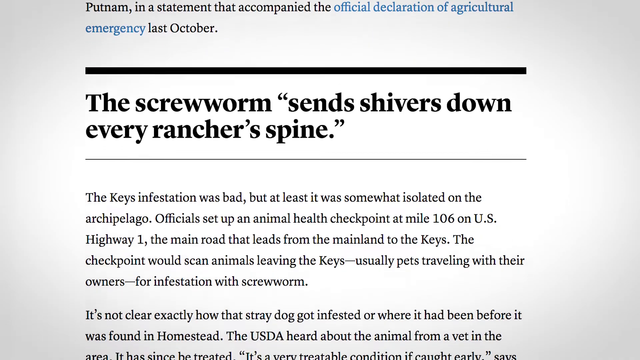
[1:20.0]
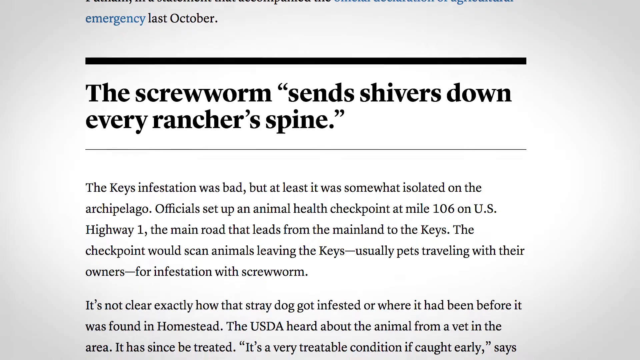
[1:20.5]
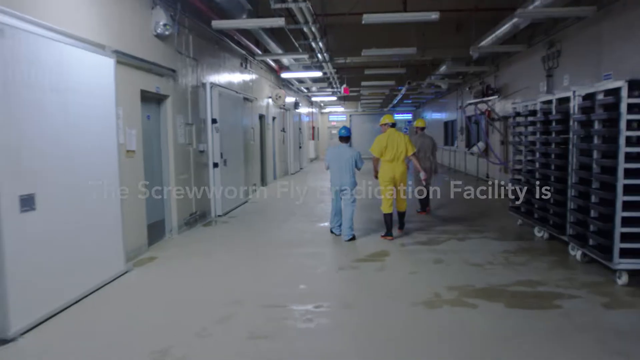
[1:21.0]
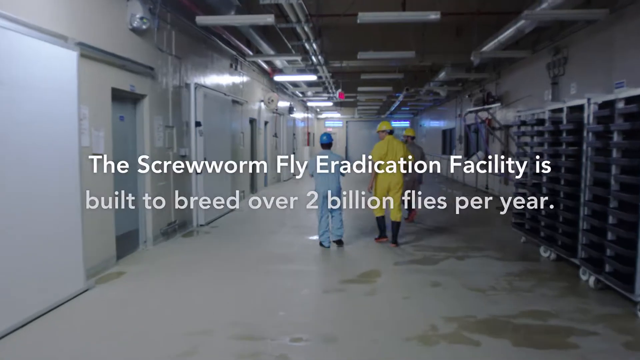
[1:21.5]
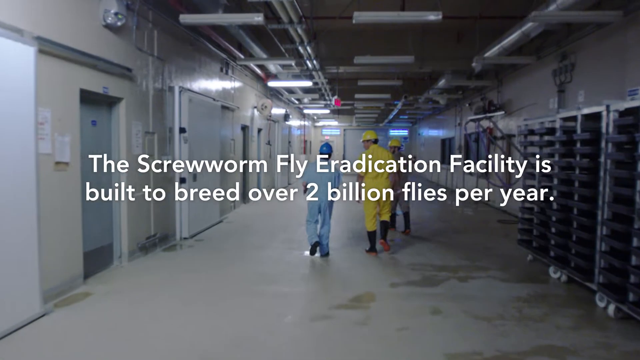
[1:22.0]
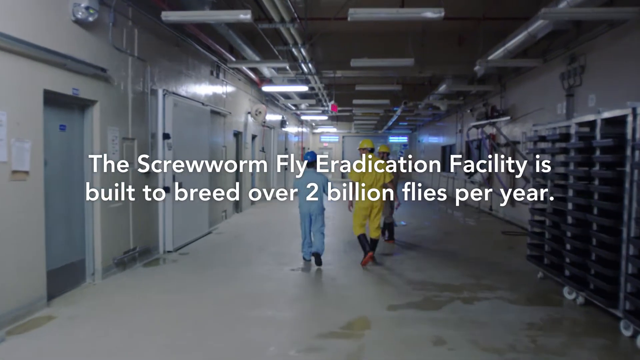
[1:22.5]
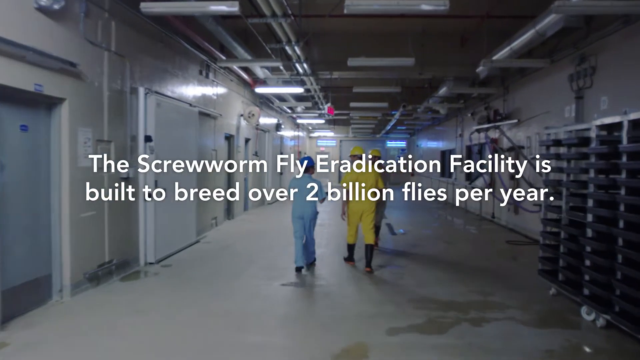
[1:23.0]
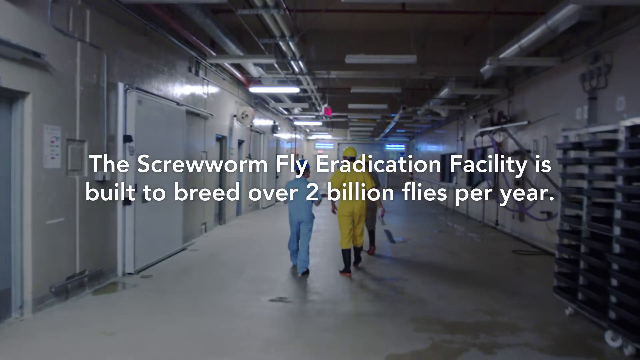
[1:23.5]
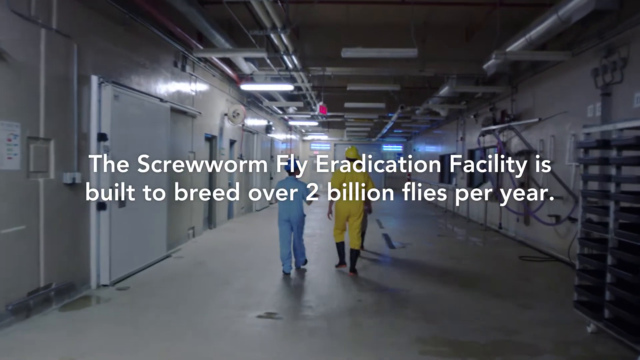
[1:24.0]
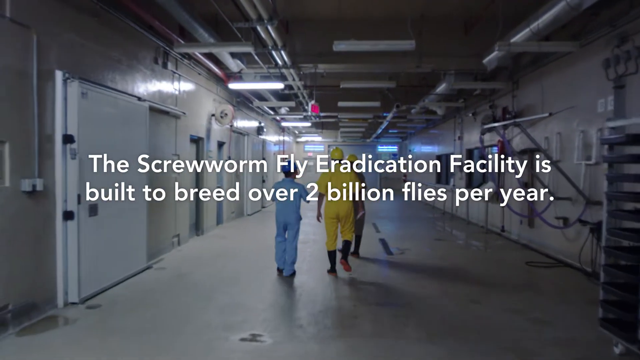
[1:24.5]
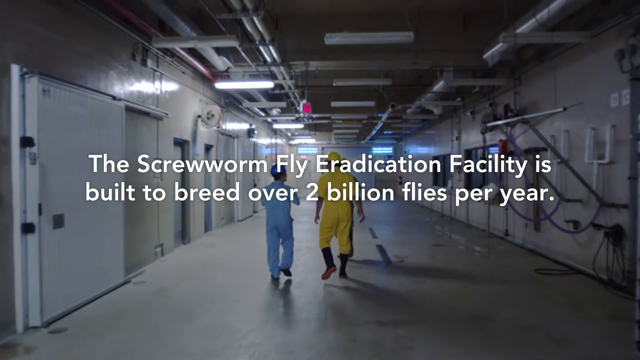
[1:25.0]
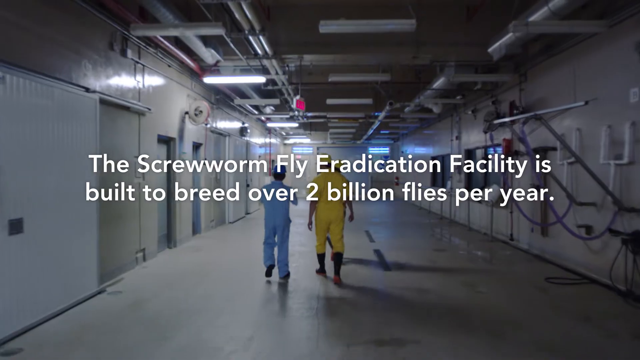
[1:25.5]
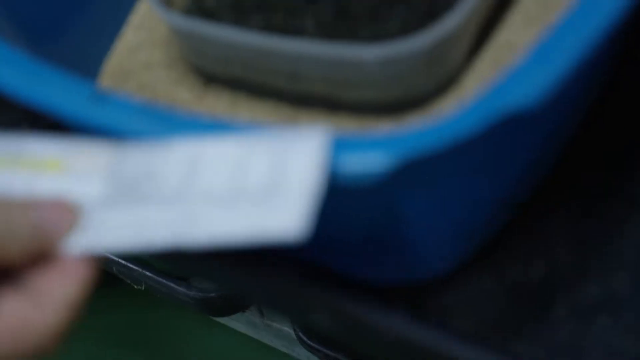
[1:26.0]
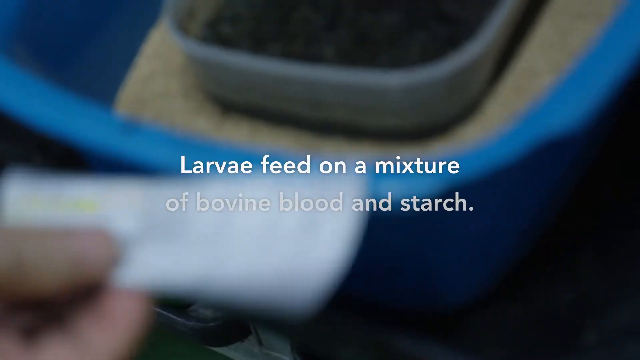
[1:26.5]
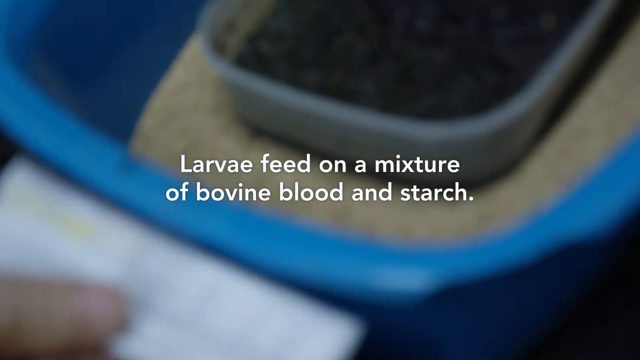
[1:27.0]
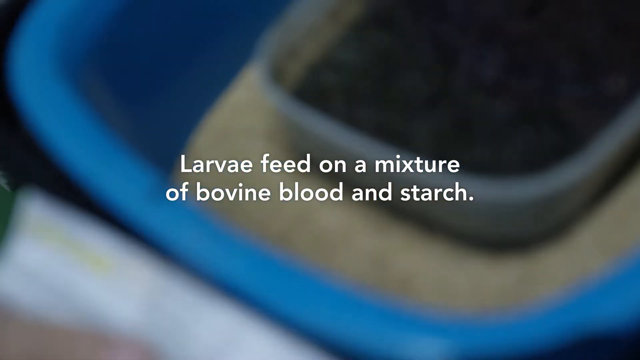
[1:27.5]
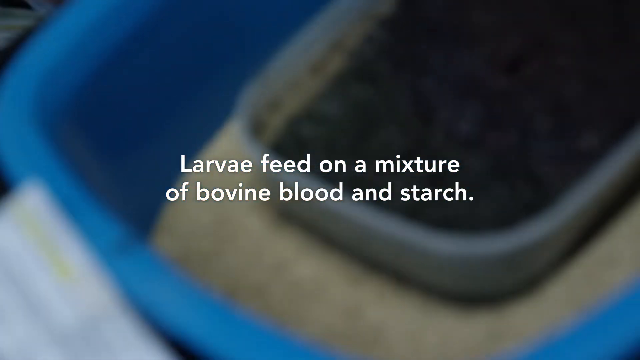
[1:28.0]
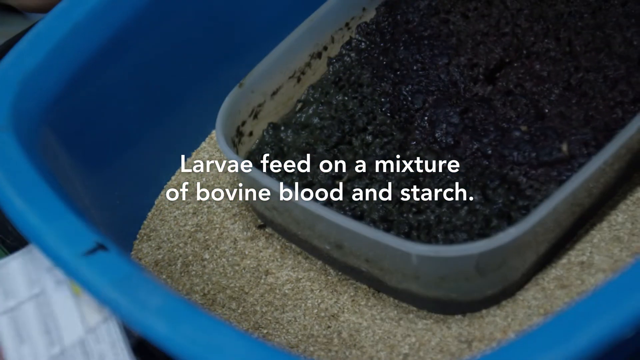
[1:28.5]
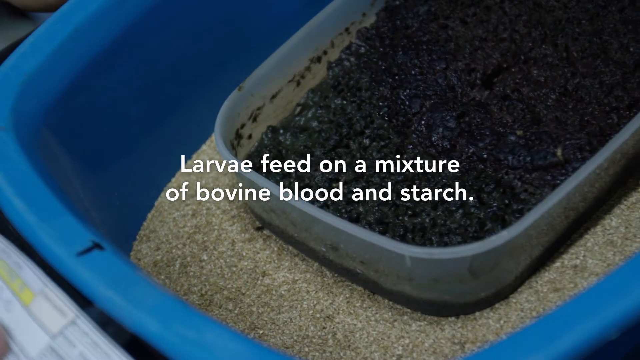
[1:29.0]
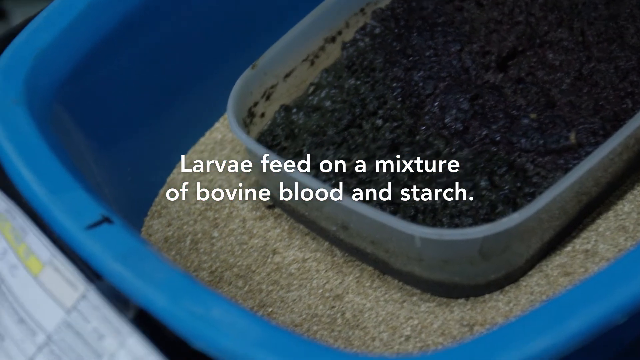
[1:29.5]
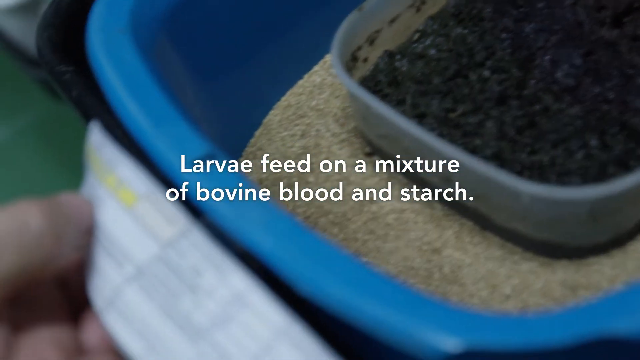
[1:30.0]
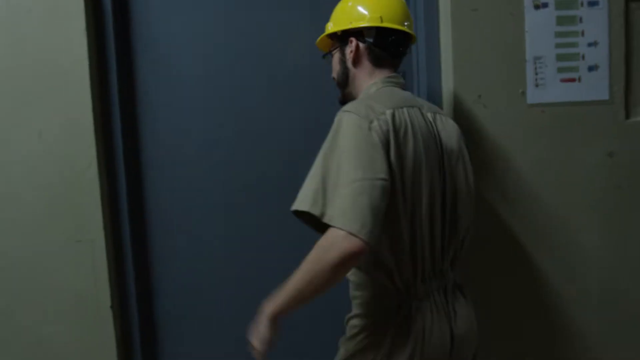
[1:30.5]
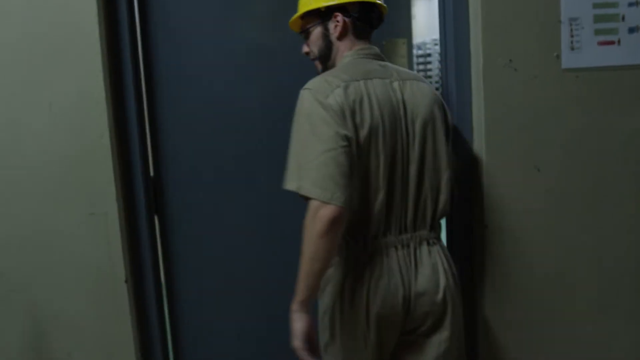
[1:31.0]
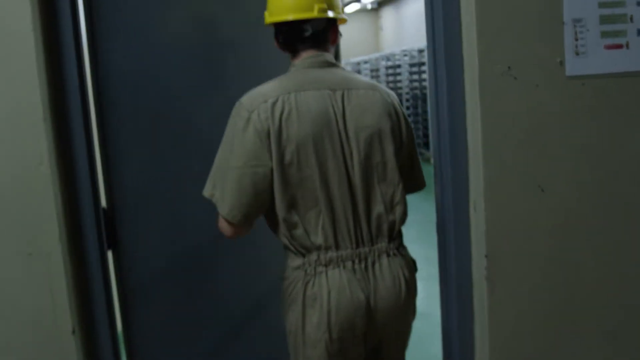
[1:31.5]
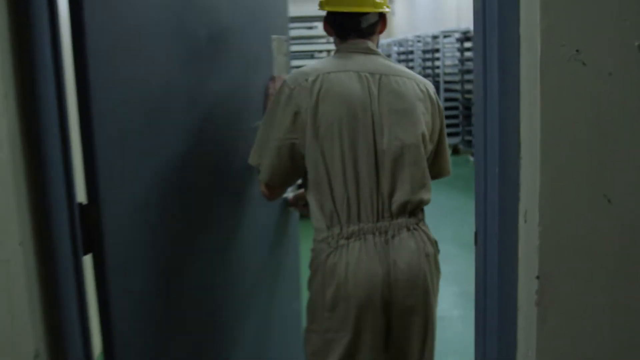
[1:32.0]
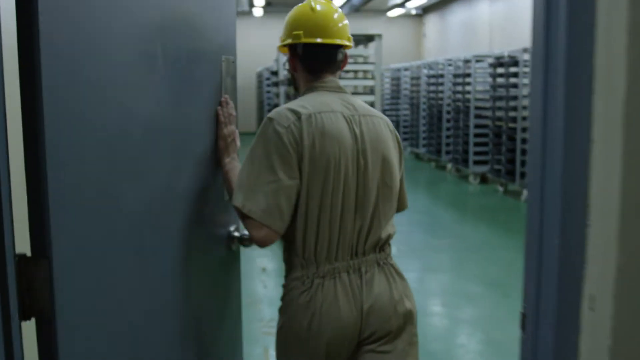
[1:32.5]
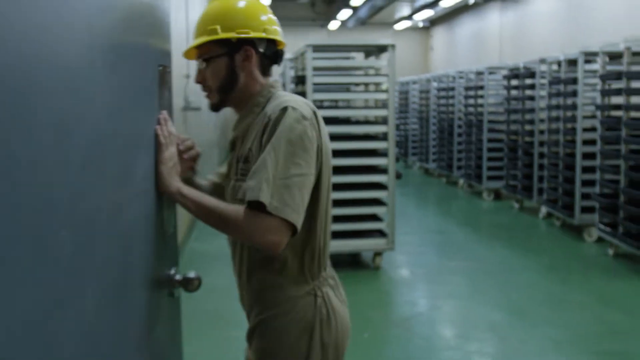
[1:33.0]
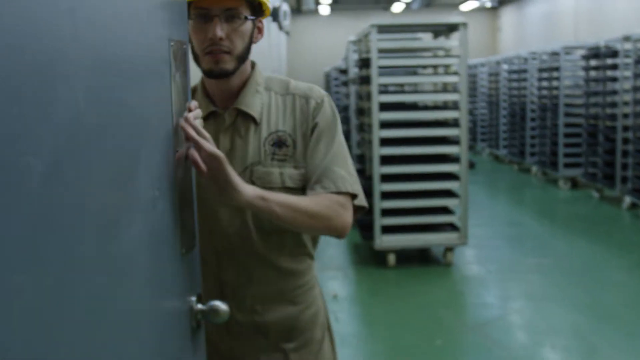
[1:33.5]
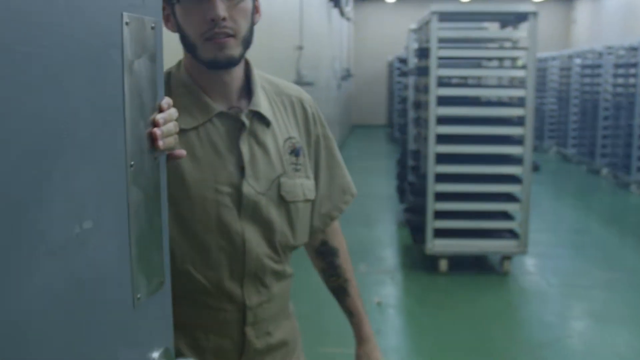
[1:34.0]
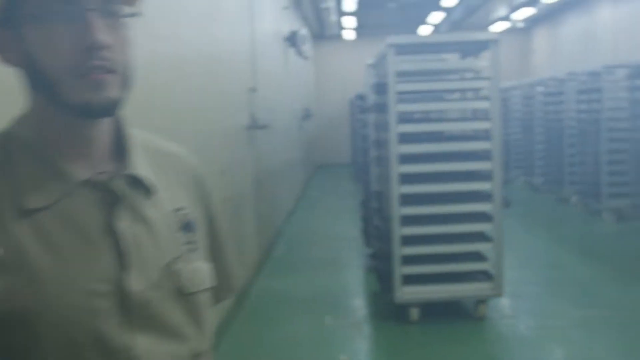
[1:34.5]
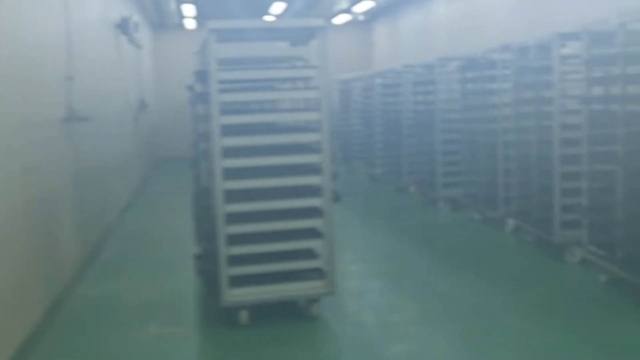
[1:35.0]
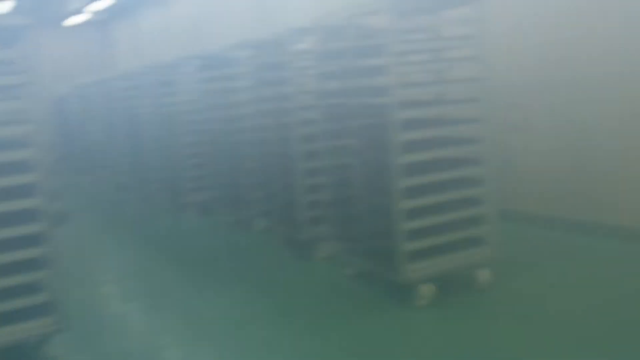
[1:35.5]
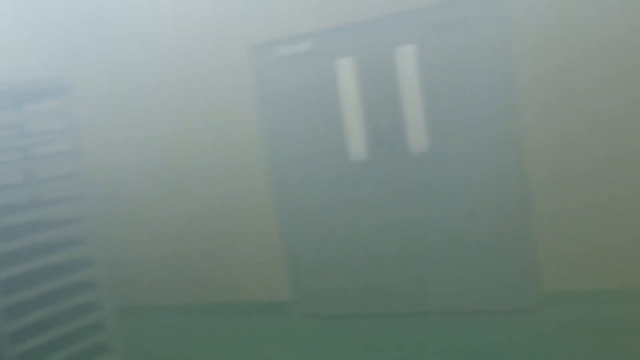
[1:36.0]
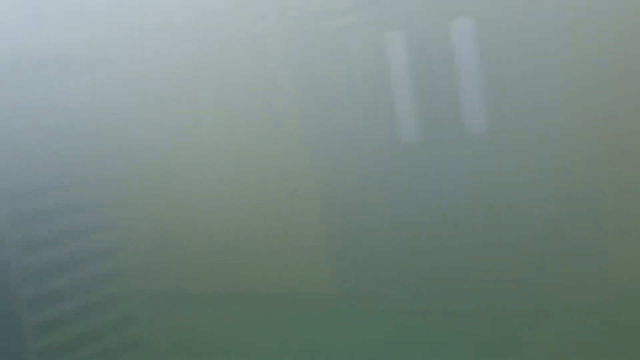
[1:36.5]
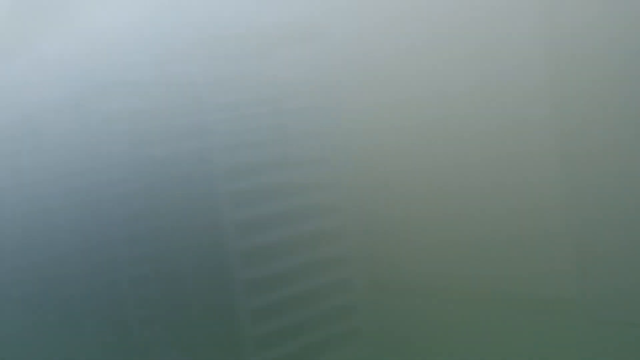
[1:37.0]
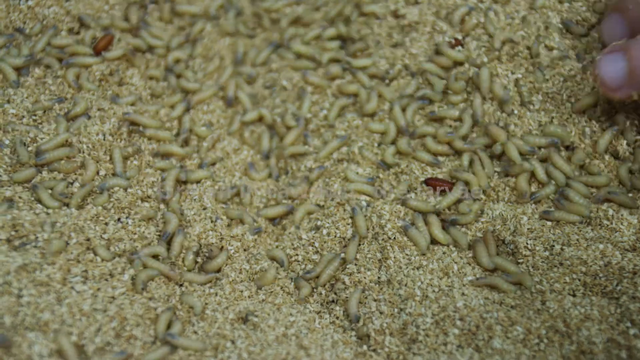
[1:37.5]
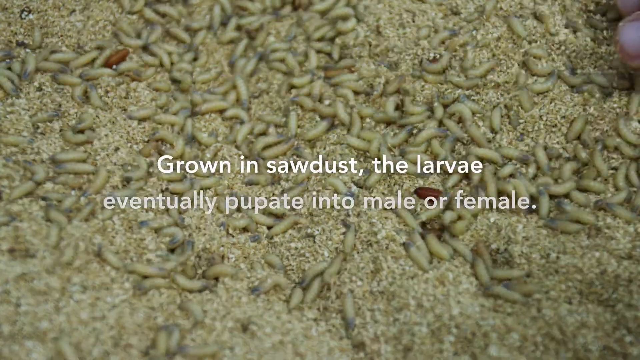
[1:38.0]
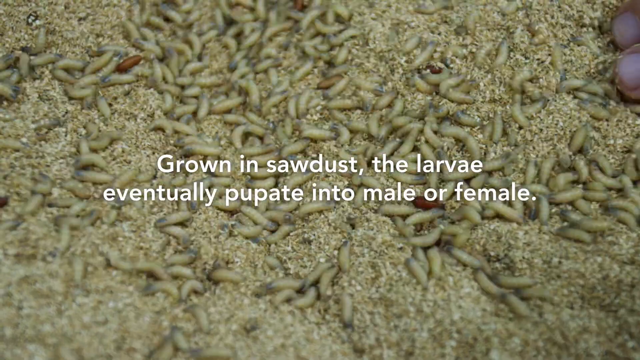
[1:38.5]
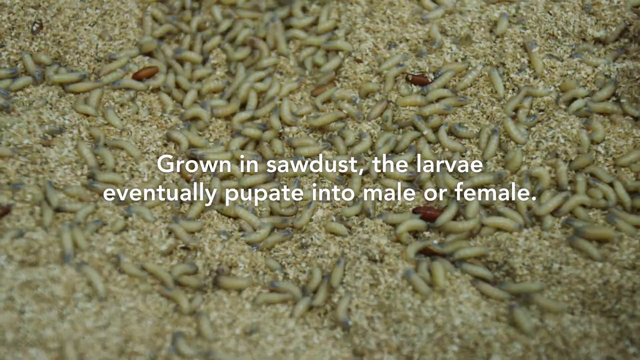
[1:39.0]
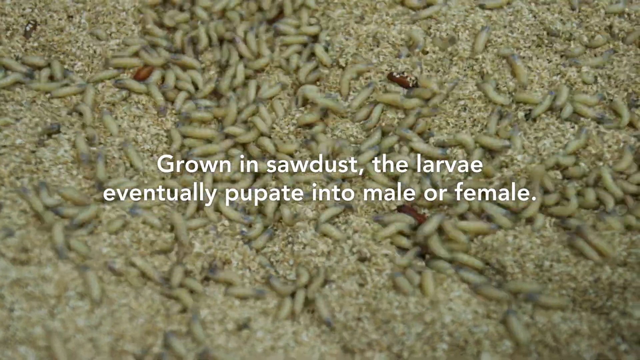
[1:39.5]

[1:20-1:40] The view is focused on a part of the article stating "screwworms send shivers down every rancher's spine", with many paragraphs underneath. The article has a white background and black font. After scrolling through a few parts of the article, the video moves to two men walking down a dark hallway; one wears an all-blue outfit and the other wears a yellow outfit with a hard hat on his head. Next is a still shot of a blue bin with various contents, with white text across it reading "larvae feed on a mixture of bovine blood and starch". The view zooms out and moves to a man in a yellow hard hat walking into another large room with many shelves and carts. The video gets a little foggy before moving to a shot of larvae crawling around in a bin.